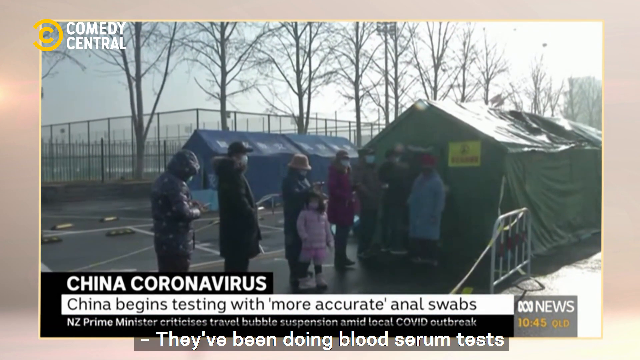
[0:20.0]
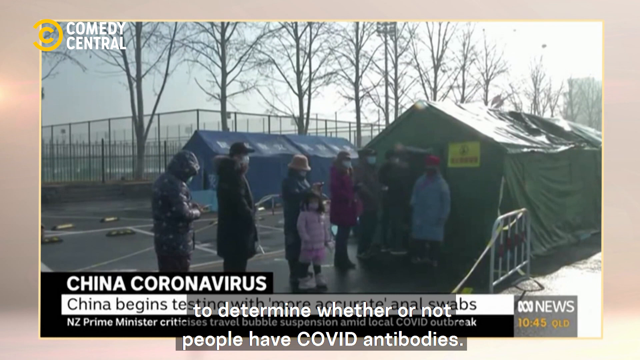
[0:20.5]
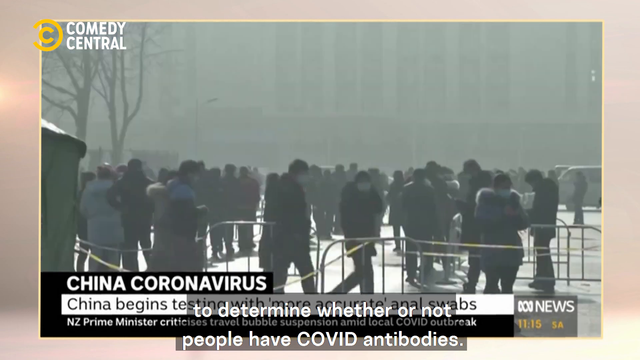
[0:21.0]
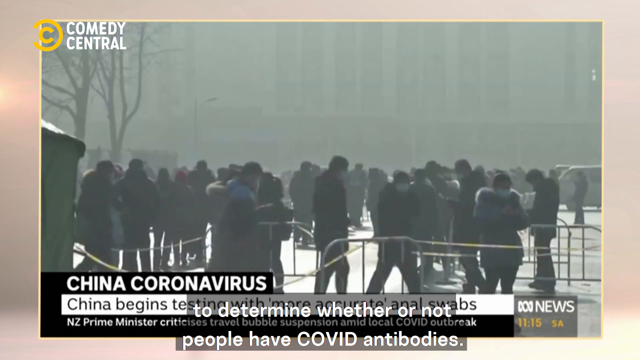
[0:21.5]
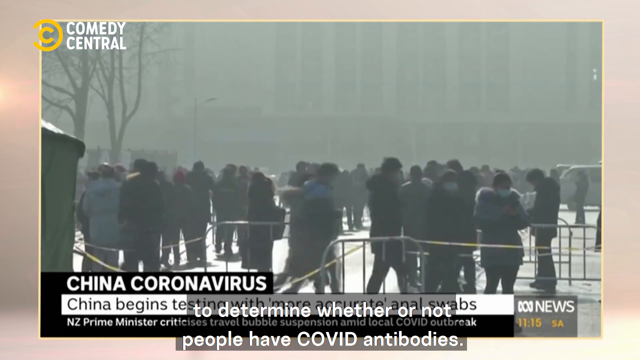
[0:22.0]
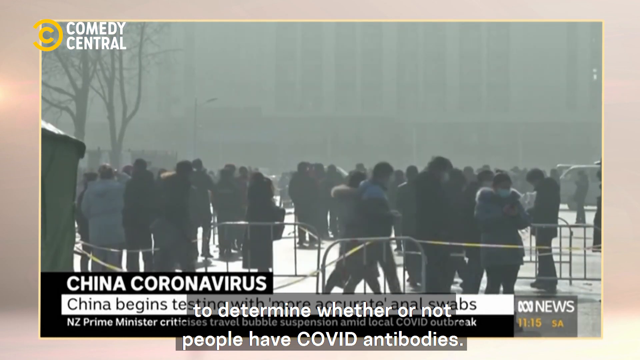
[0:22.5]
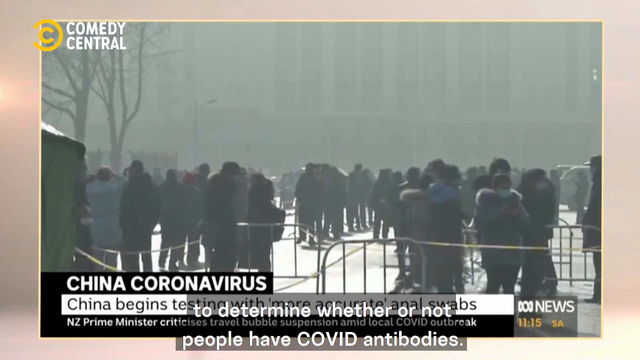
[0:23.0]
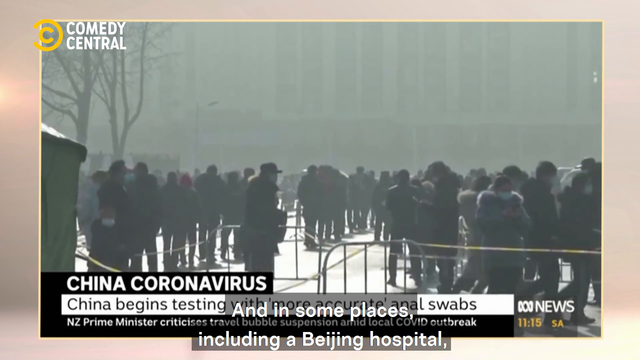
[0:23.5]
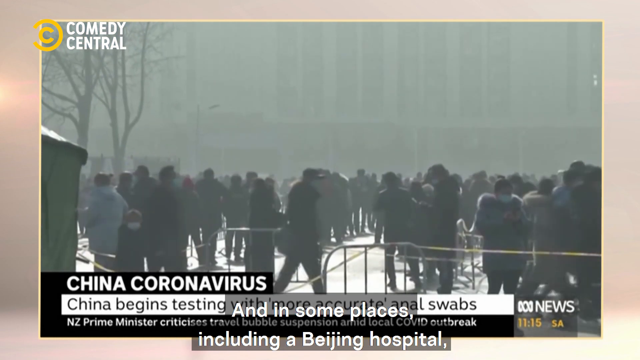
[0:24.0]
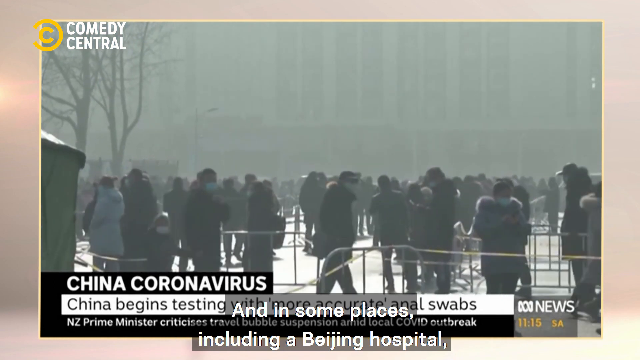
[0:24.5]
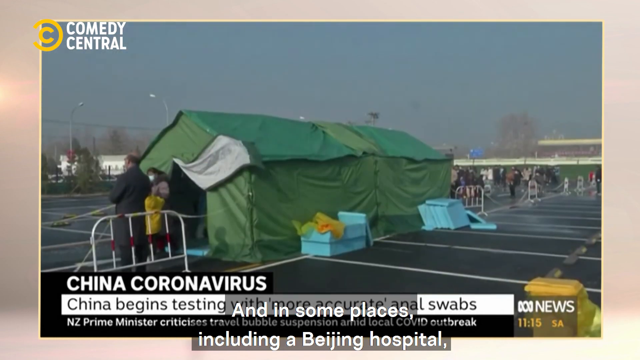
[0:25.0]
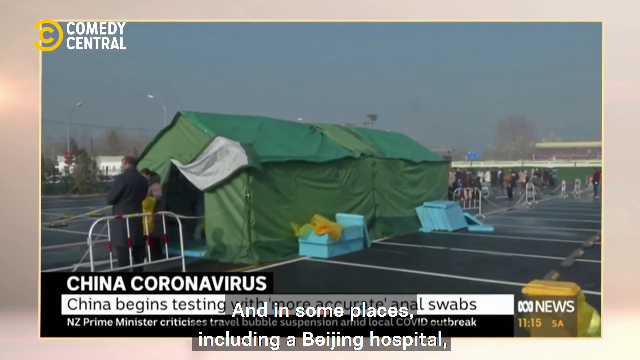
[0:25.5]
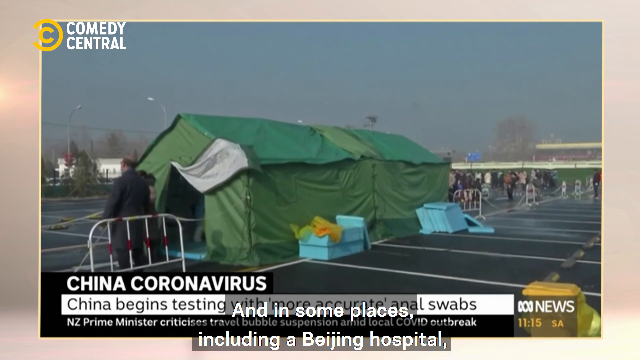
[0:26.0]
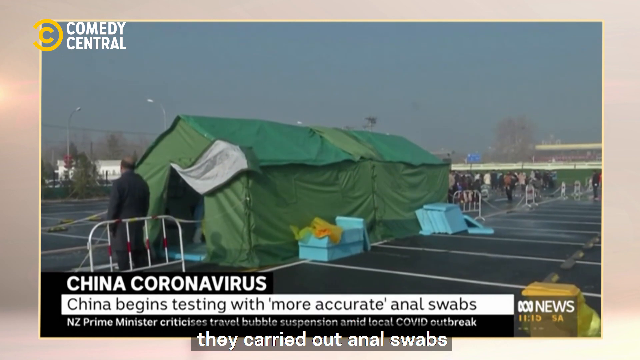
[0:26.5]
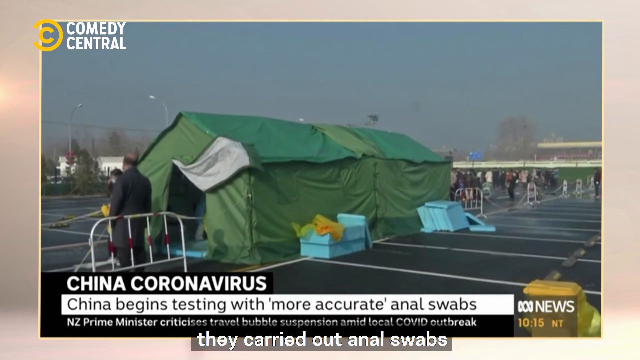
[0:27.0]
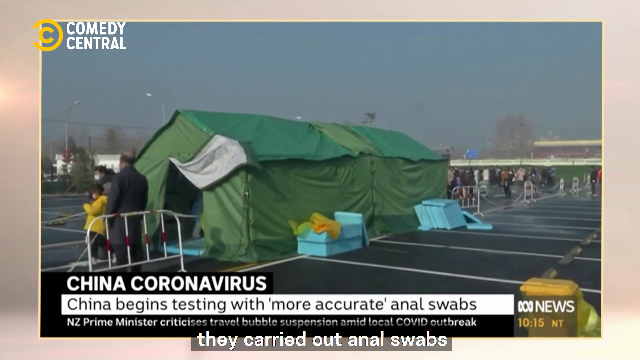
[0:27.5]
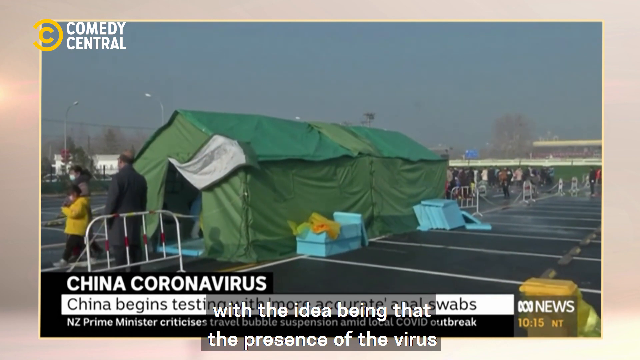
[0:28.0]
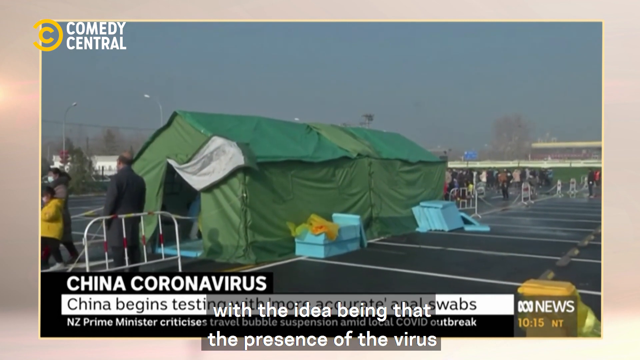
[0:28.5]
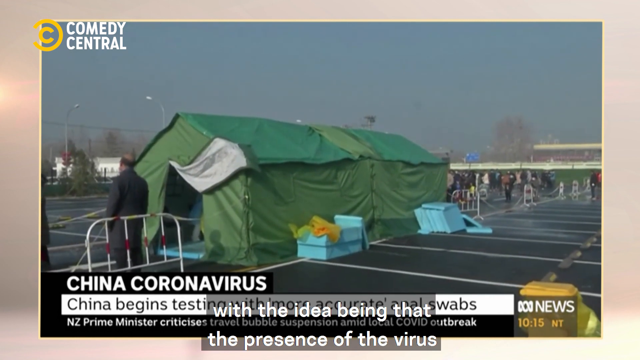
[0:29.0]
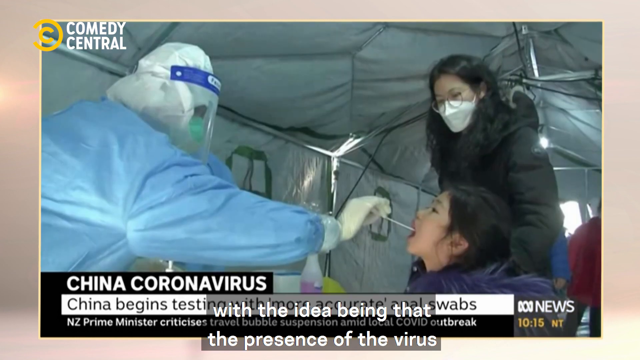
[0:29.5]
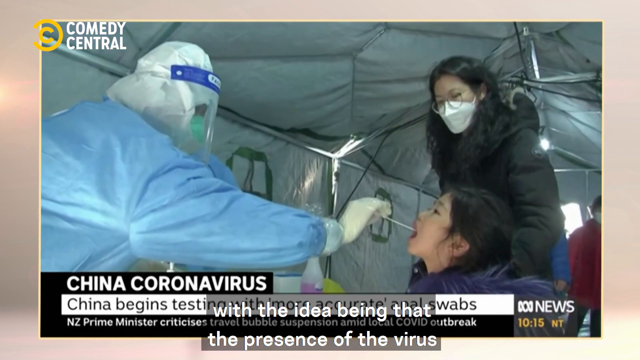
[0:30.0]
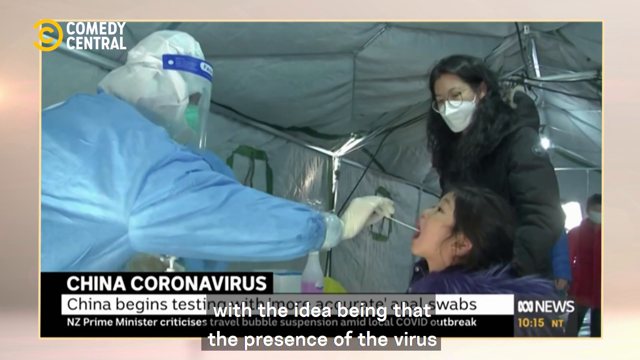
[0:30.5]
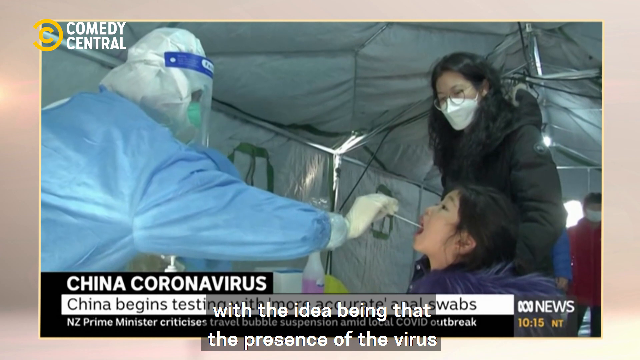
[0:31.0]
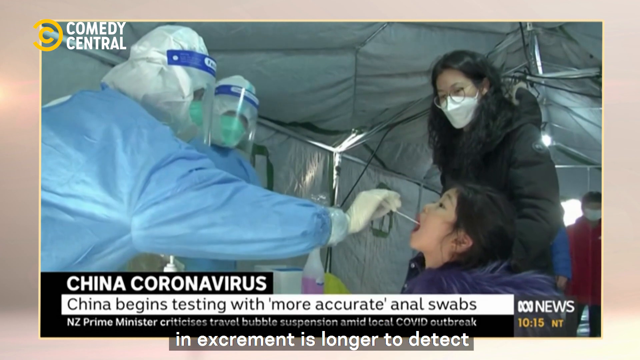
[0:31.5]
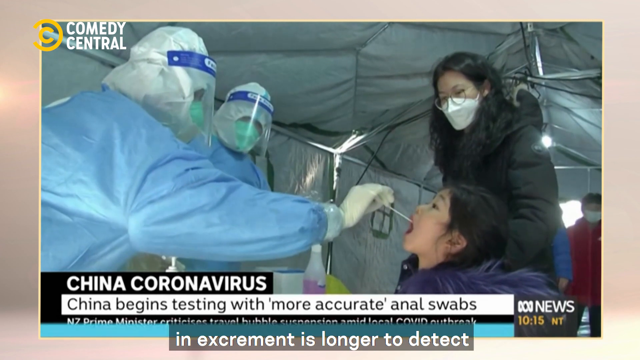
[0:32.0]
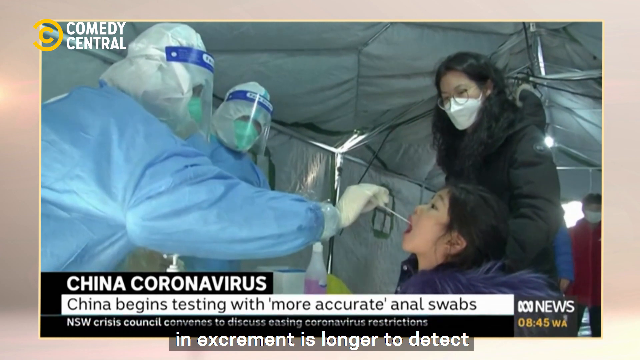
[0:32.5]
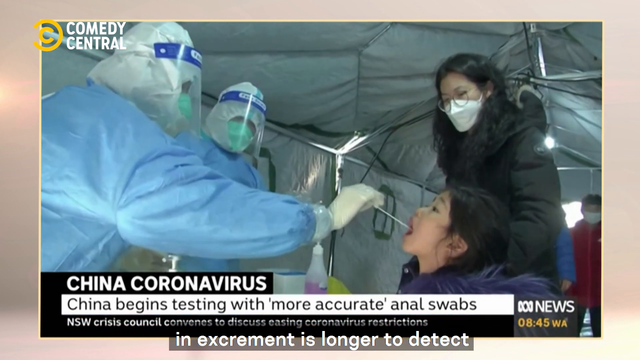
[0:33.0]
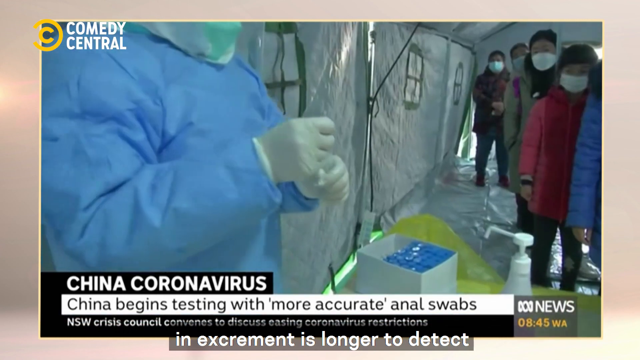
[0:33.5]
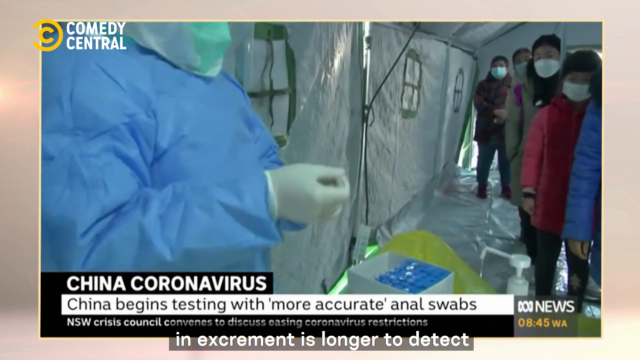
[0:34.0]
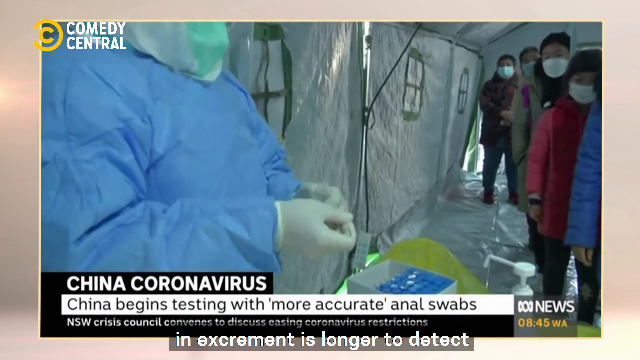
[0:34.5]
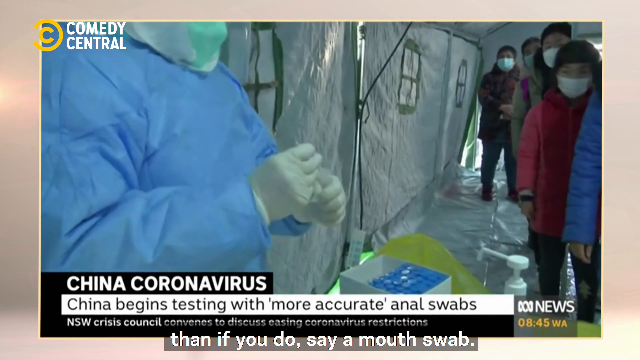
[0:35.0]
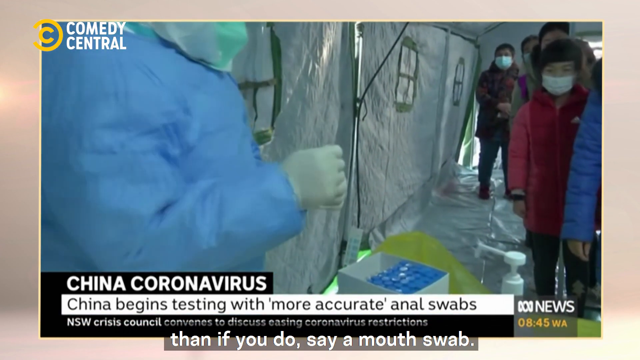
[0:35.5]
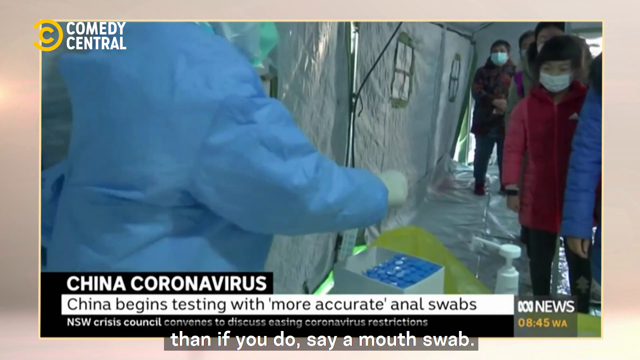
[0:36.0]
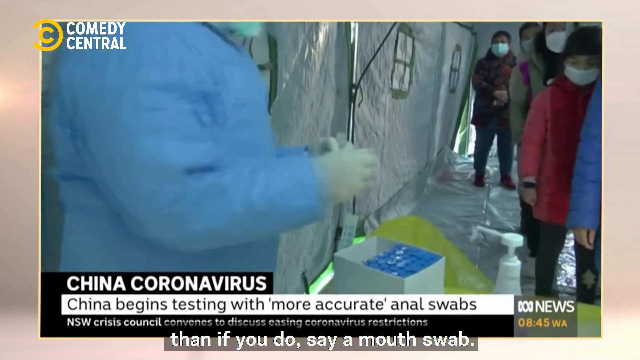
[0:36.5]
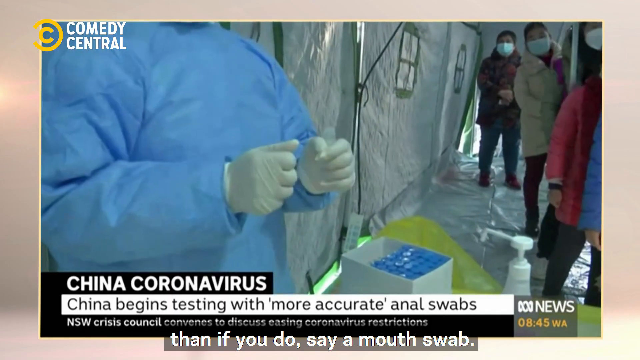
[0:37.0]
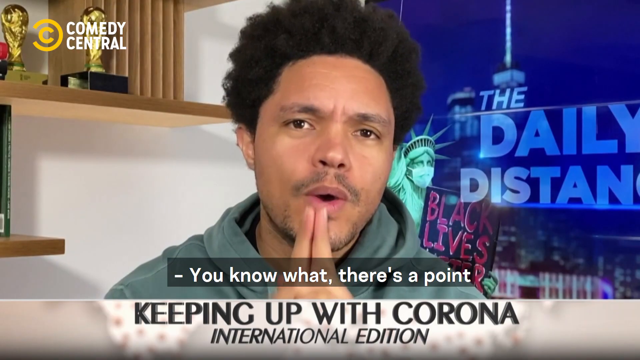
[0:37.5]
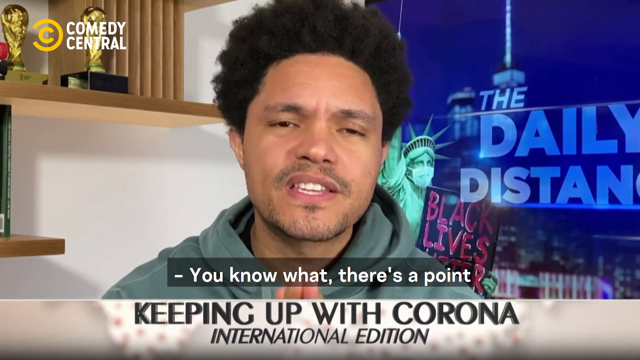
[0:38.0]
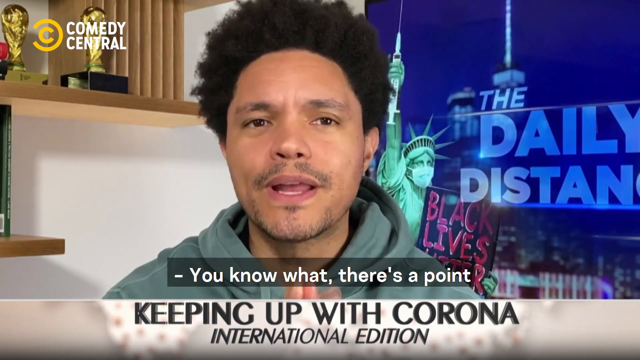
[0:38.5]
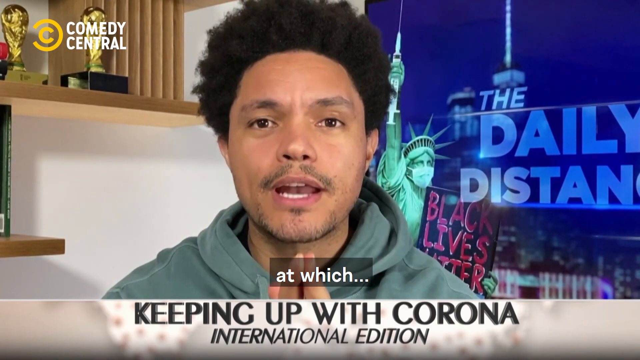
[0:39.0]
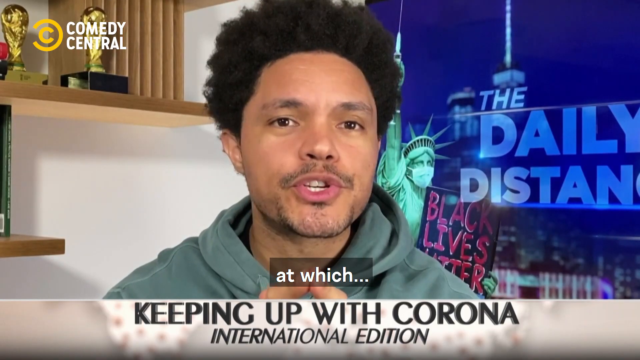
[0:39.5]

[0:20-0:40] The setting looks like it may be an old parking lot with two tents. One of the tents has a line of people outside, all dressed very warmly. The title on screen still reads "China coronavirus. China begins testing with more accurate anal swabs." People stand in line and walk, and there appear to be more medical tents that people pass through, entering on one side and exiting on the other. Inside a tent, someone is completely dressed in PPE, with masks, gloves and head coverings. A child gets a swab in her mouth while her mother stands next to her, wearing a face mask and warm clothing. The person then prepares the sample just taken, and lines of people are still waiting to go through.